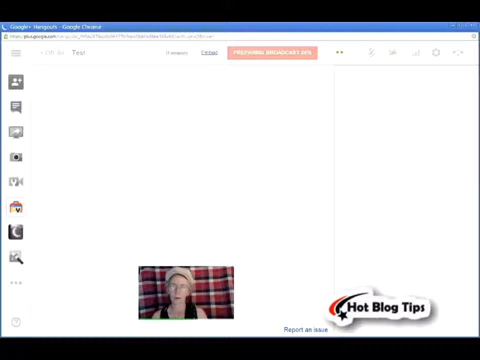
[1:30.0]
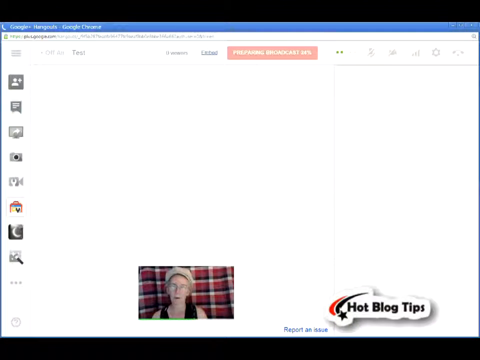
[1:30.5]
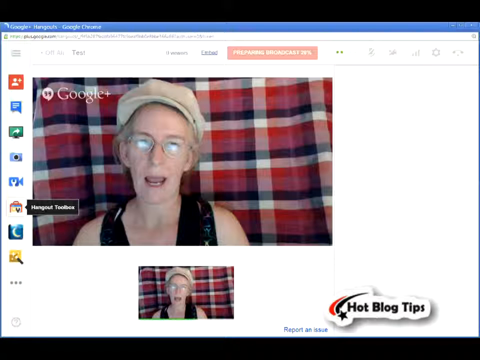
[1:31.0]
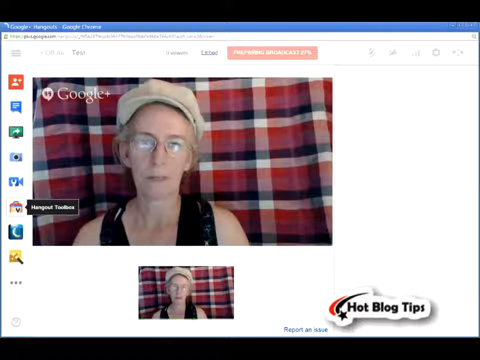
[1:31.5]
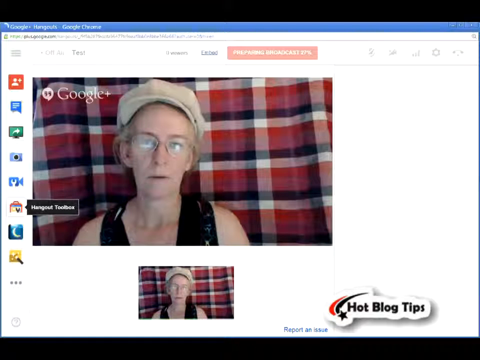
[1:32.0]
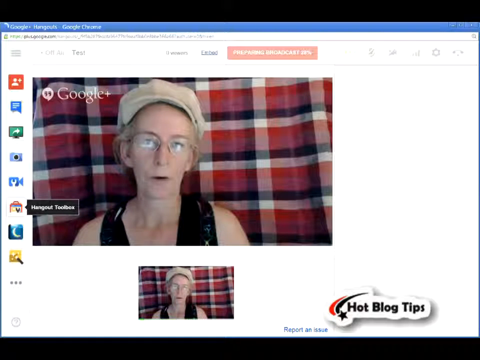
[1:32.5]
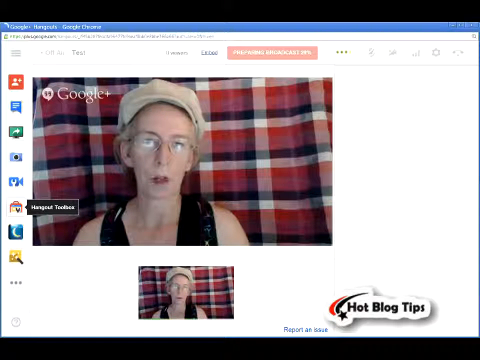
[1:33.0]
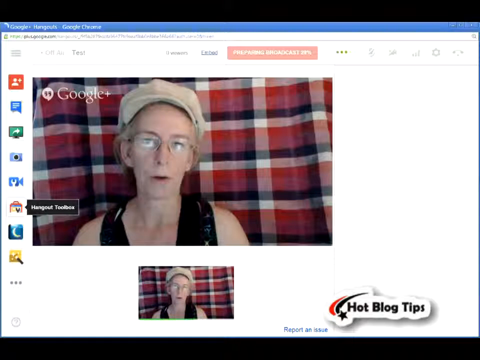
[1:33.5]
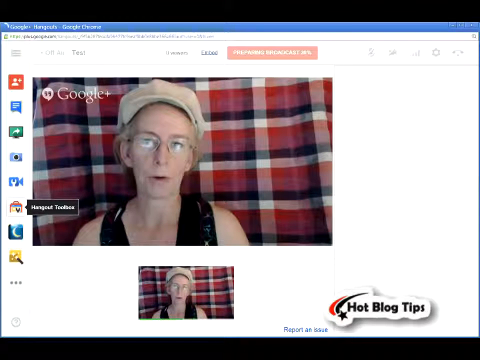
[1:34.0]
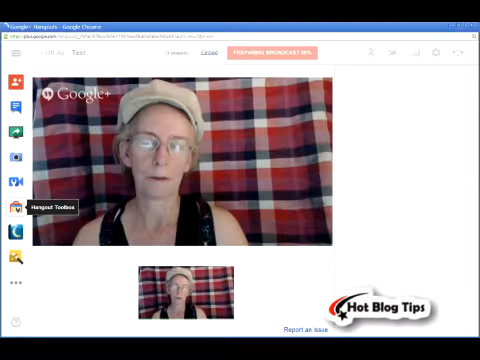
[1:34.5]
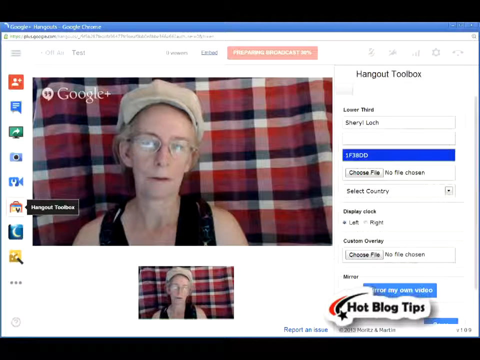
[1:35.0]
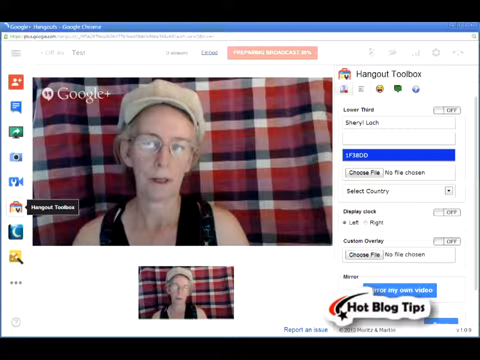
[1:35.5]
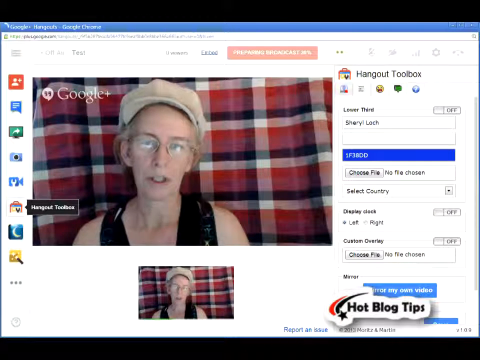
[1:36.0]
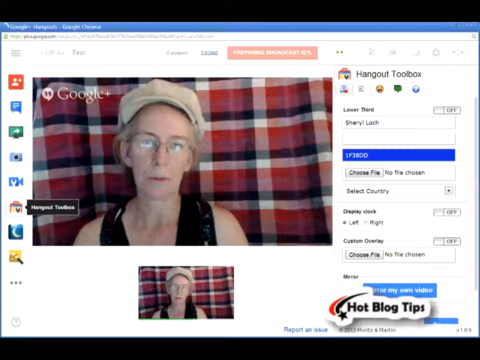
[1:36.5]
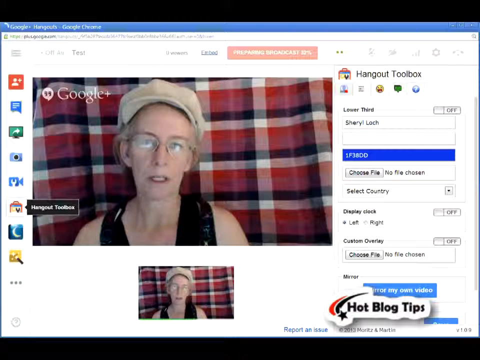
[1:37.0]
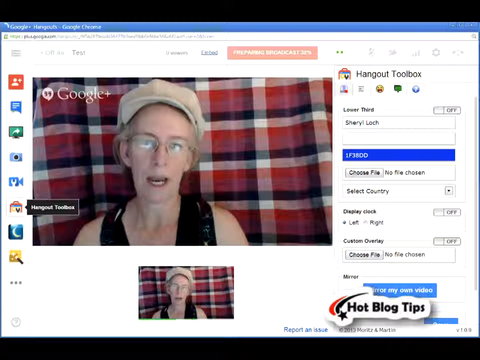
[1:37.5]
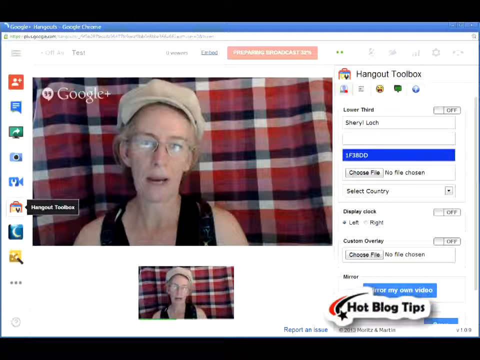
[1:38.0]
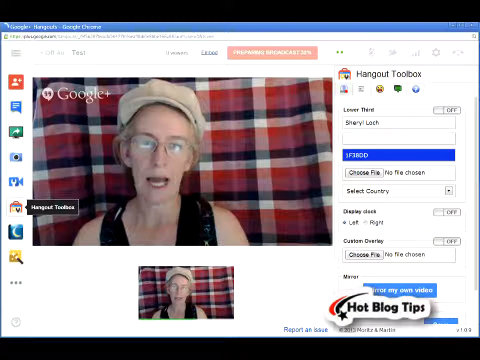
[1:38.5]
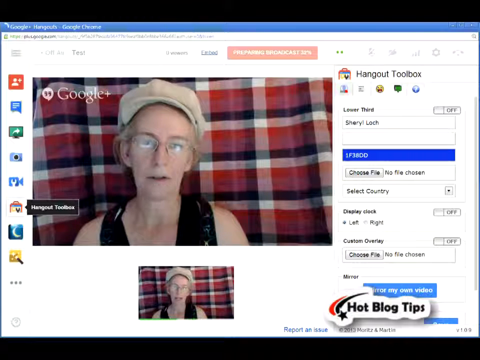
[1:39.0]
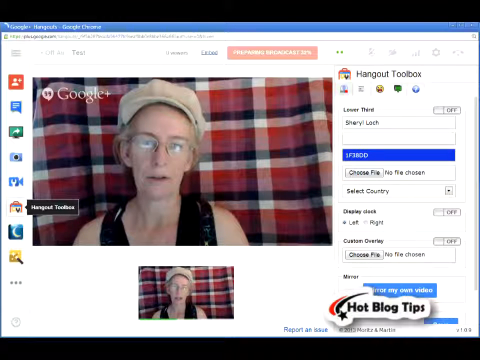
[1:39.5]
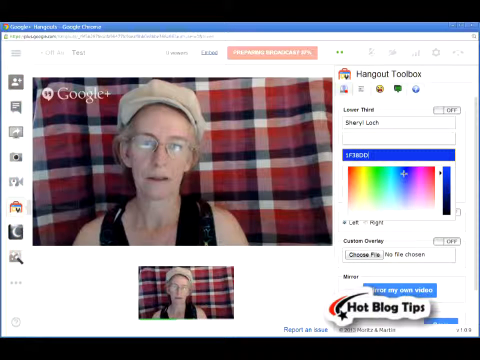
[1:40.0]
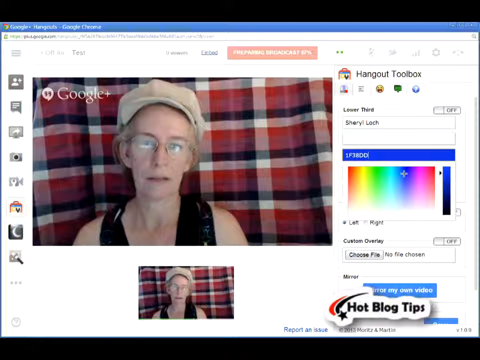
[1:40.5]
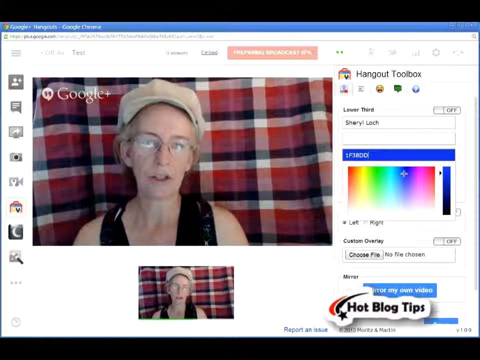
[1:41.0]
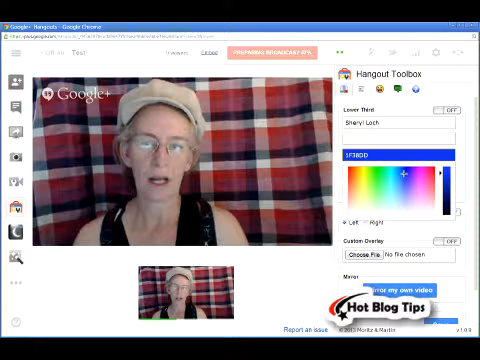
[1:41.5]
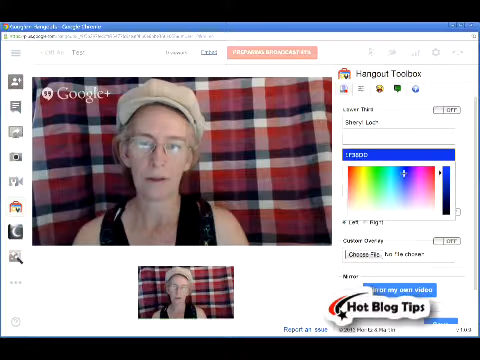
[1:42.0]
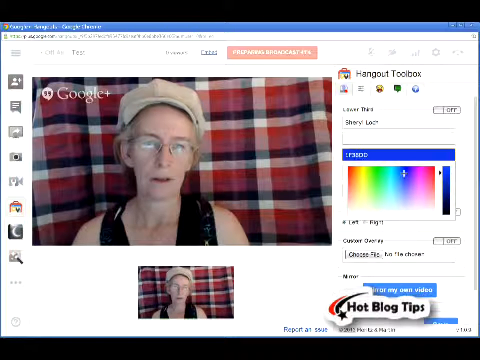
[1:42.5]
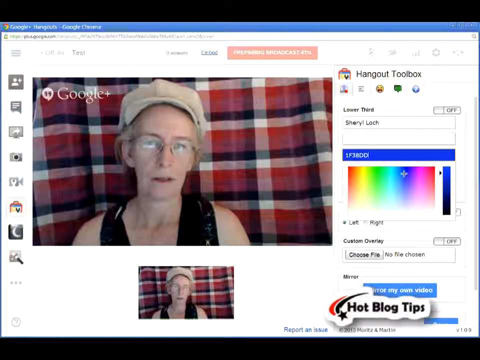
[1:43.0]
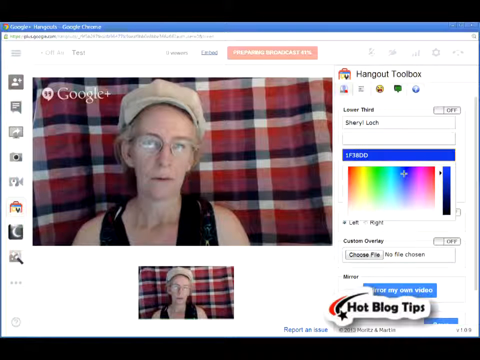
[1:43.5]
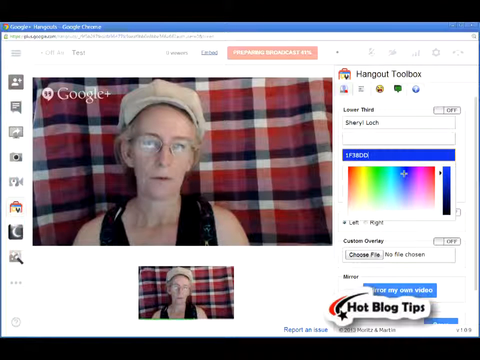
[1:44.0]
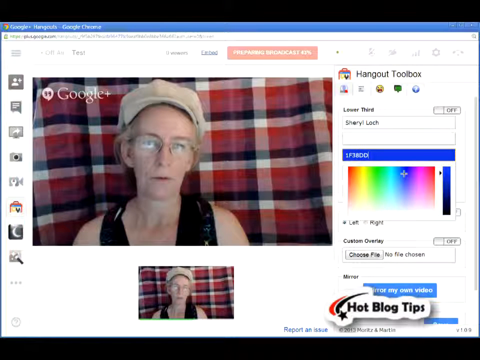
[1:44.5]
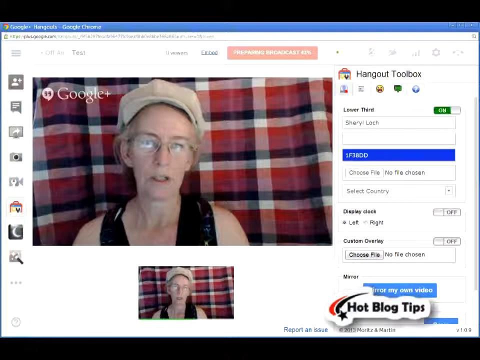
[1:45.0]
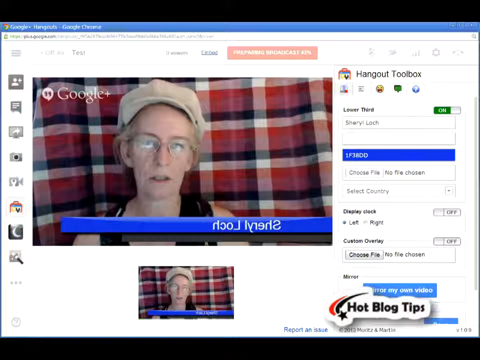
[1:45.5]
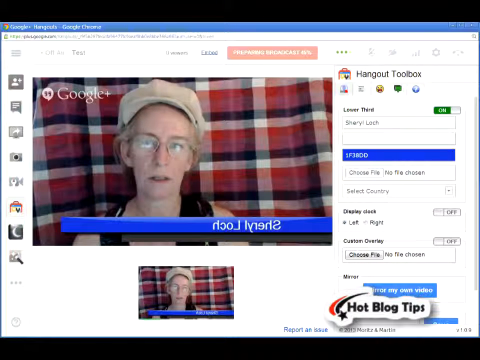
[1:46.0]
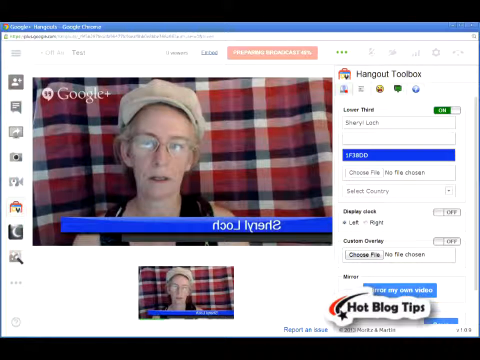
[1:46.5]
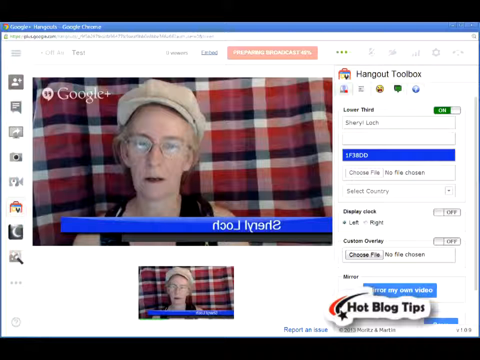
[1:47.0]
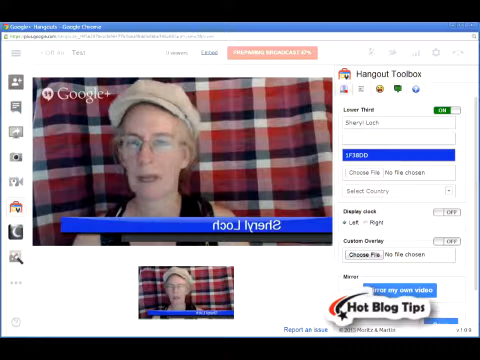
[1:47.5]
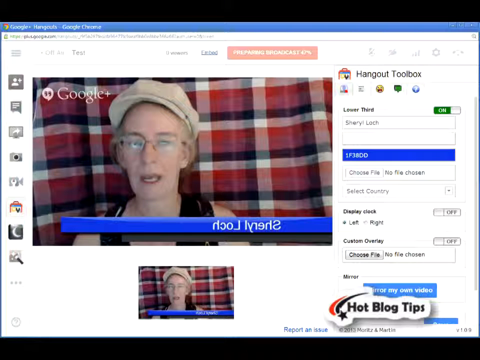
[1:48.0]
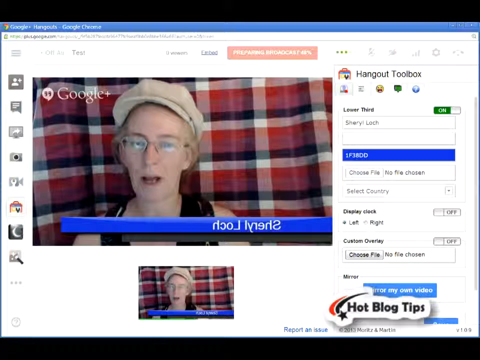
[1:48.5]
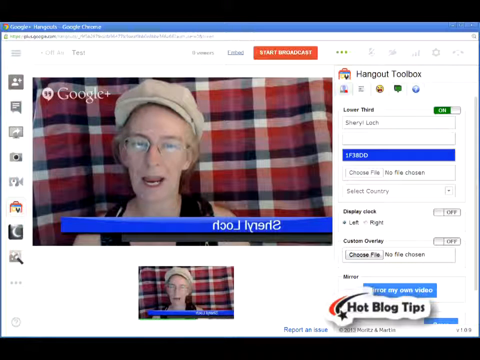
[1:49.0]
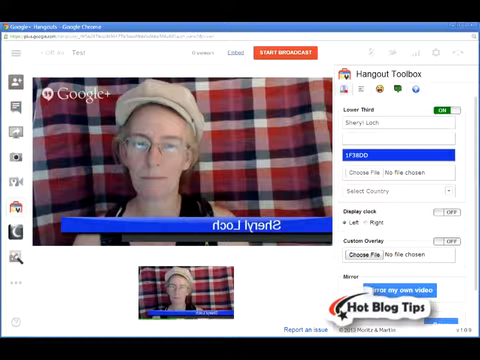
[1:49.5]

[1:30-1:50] The user appears in a video, wearing glasses, a hat and a black vest, with red material in the background, the same as in her avatar. On the right of the screen is a Hangout Toolbox with an input text box, but the video quality is poor and it is hard to read. At its bottom it says "Custom Overlay" with an option to choose a file. At the bottom right is the "Hot Blog Tips" logo with a shooting star on the left, and at the center bottom is the user's avatar. On the right another feature then appears showing a range of colors, though the poor quality makes it unclear what it is.